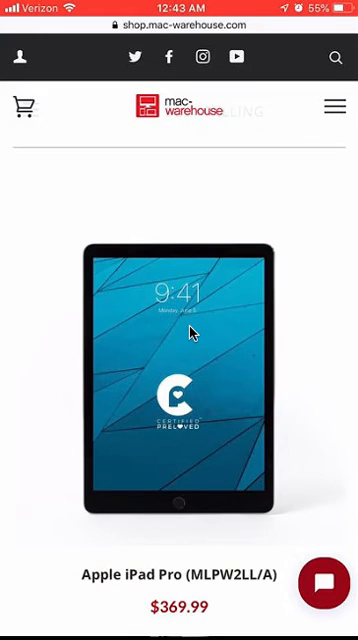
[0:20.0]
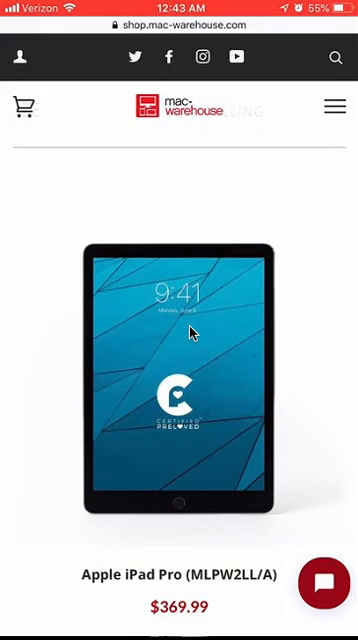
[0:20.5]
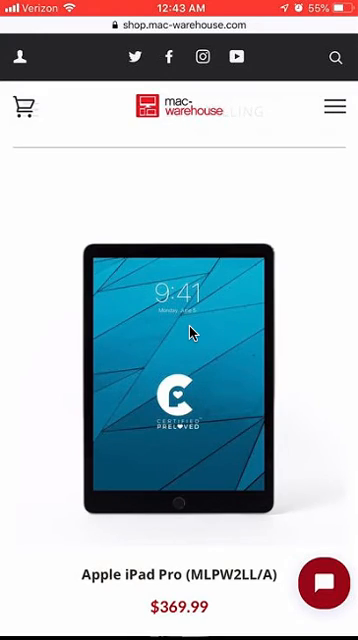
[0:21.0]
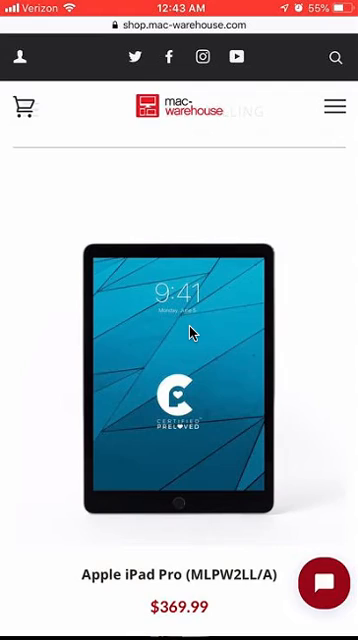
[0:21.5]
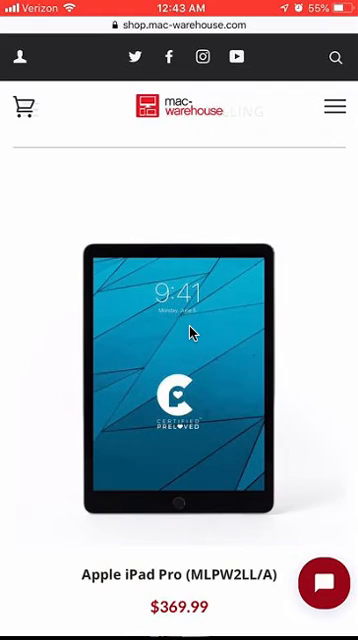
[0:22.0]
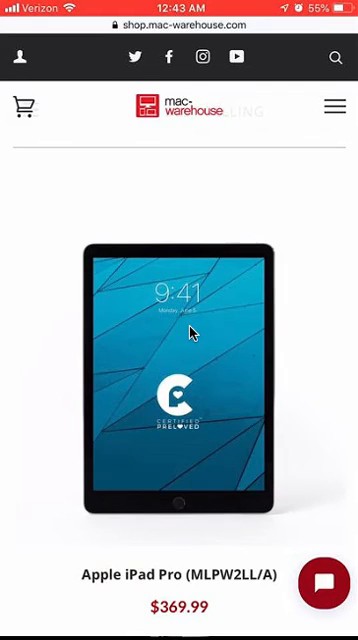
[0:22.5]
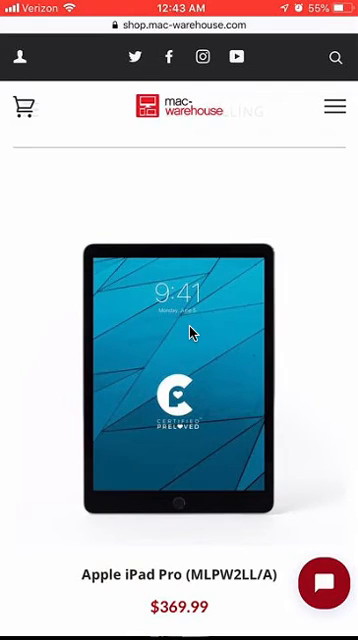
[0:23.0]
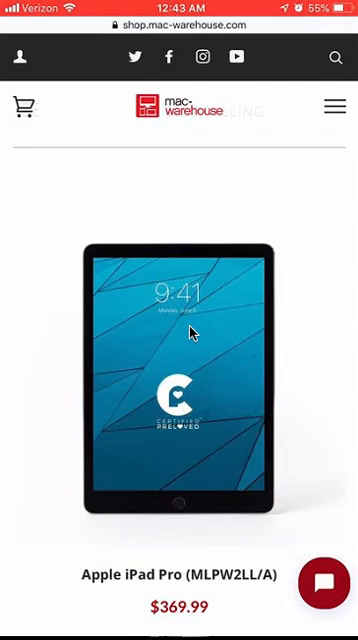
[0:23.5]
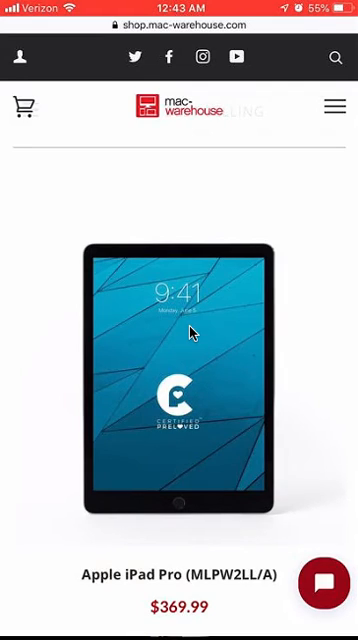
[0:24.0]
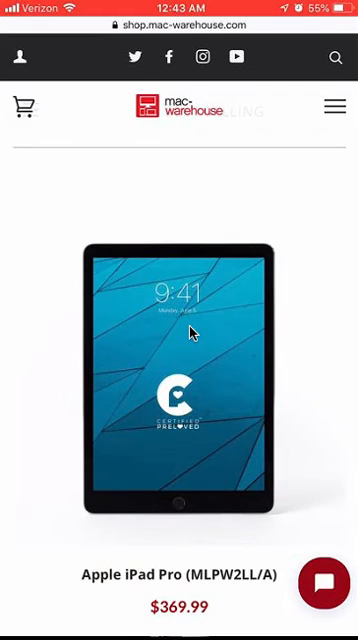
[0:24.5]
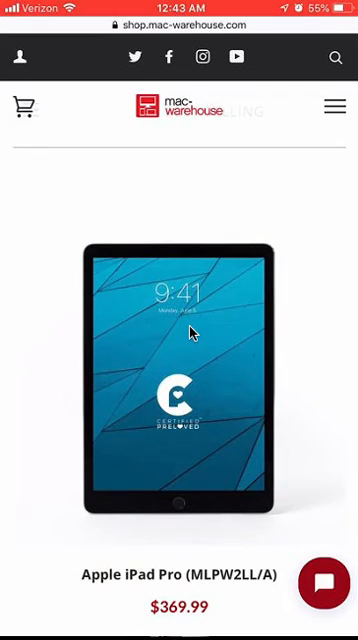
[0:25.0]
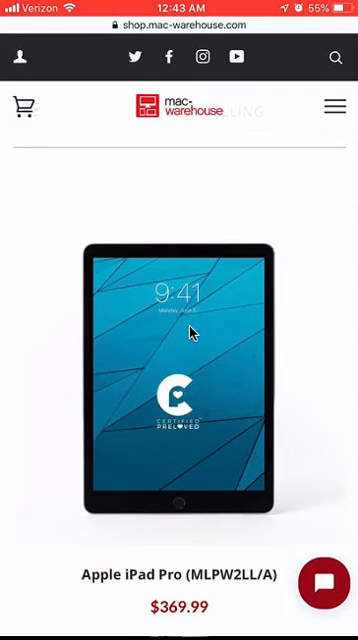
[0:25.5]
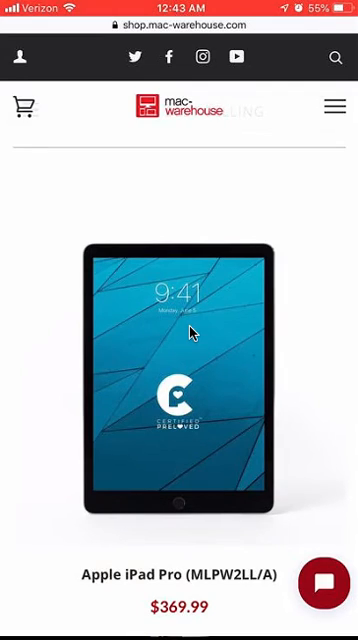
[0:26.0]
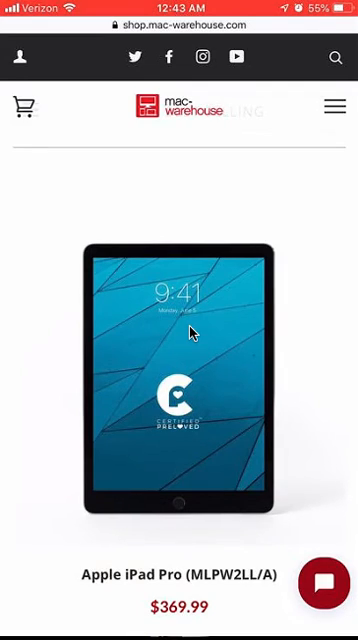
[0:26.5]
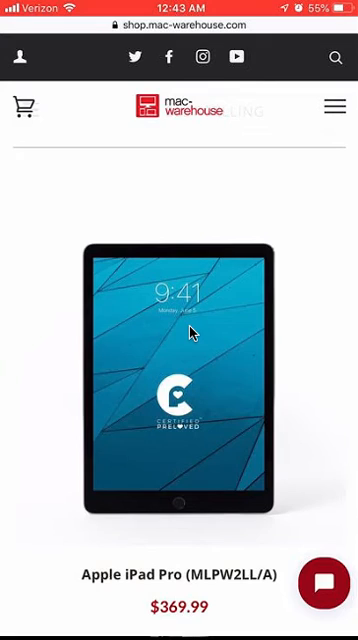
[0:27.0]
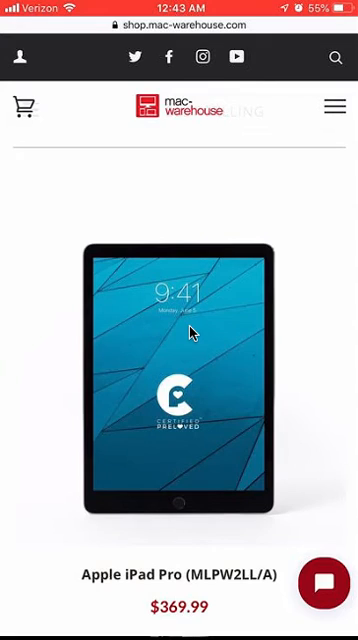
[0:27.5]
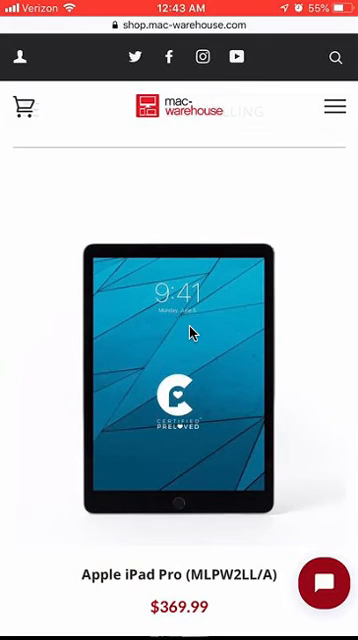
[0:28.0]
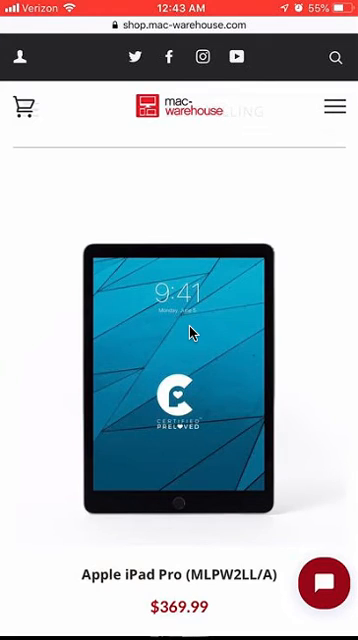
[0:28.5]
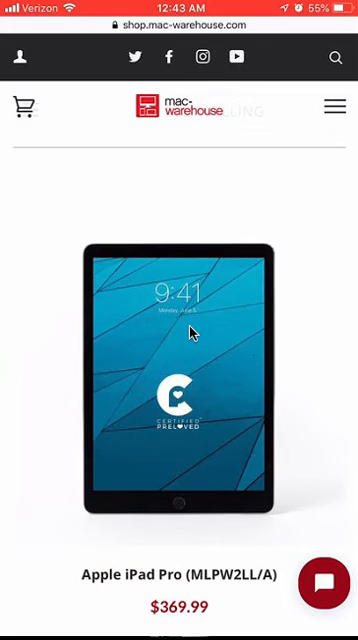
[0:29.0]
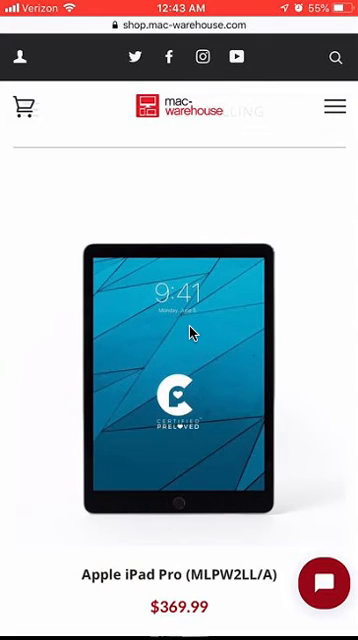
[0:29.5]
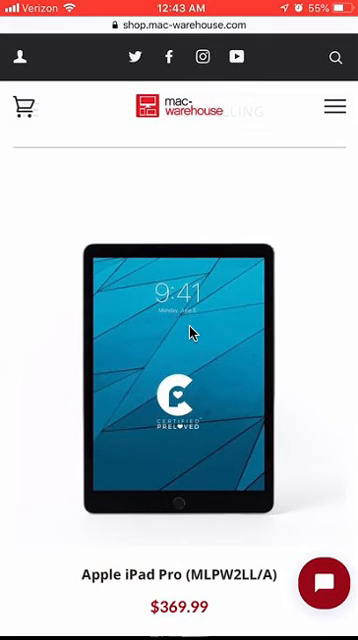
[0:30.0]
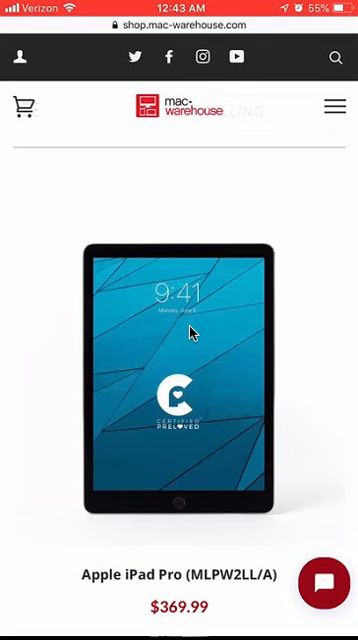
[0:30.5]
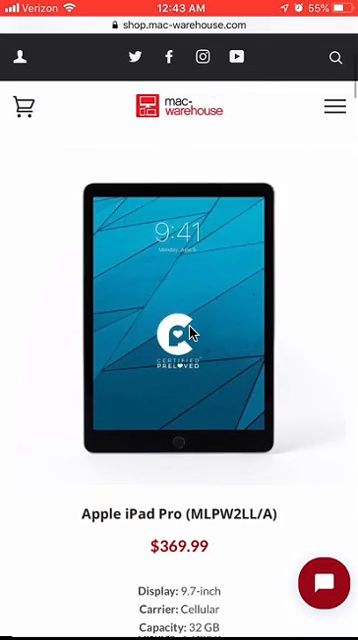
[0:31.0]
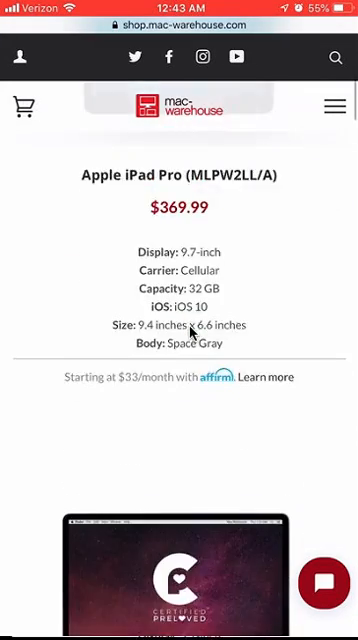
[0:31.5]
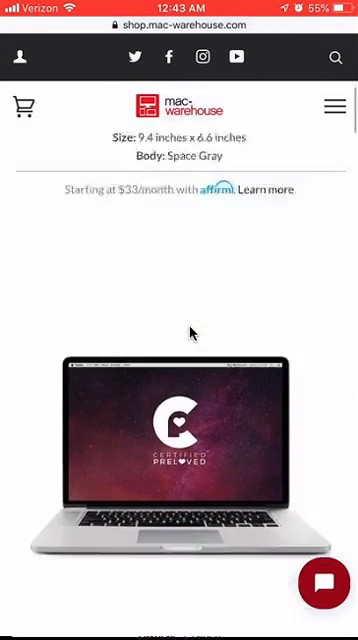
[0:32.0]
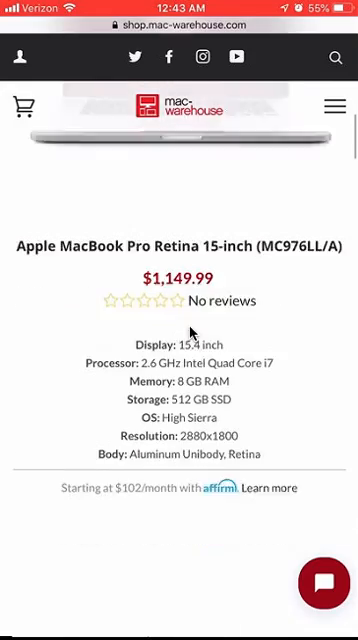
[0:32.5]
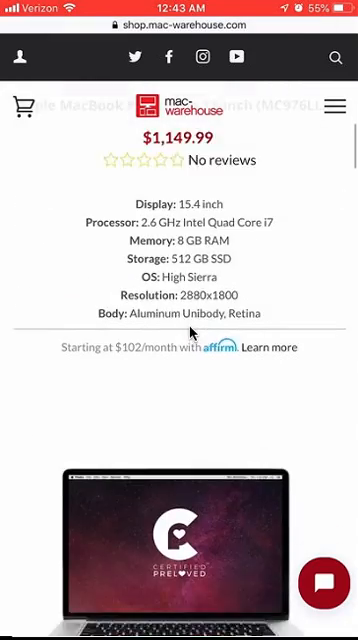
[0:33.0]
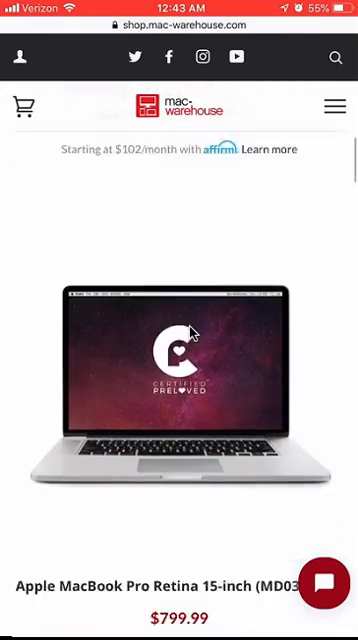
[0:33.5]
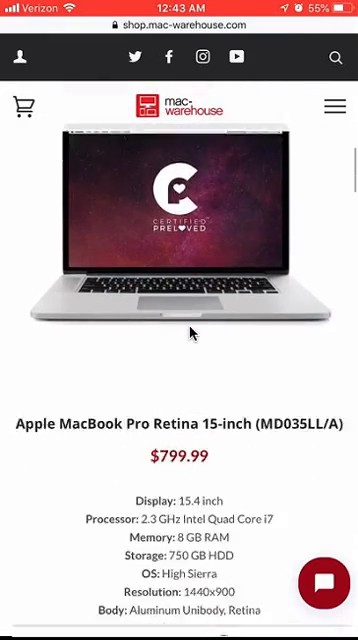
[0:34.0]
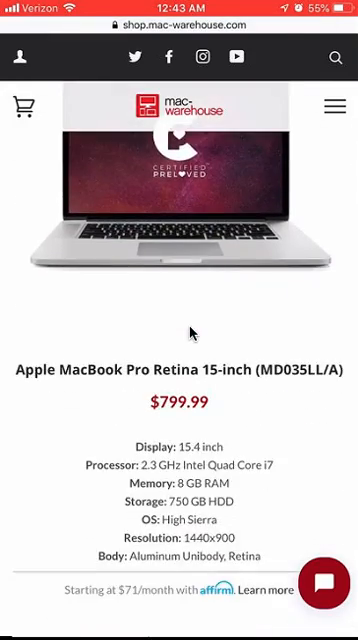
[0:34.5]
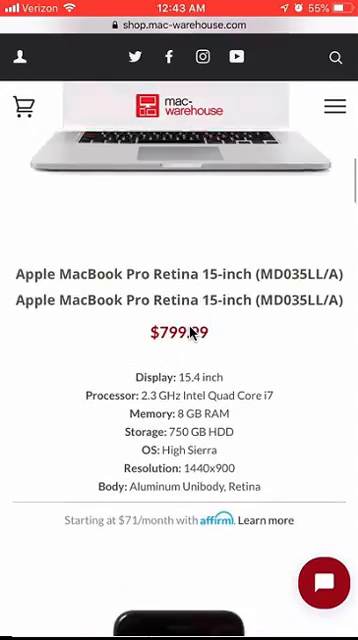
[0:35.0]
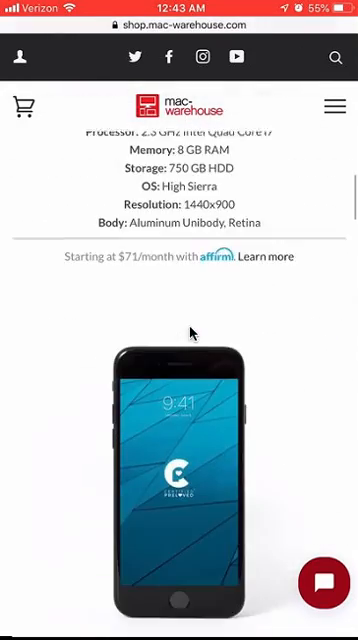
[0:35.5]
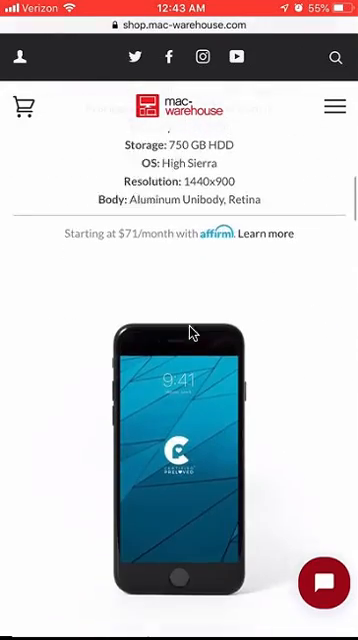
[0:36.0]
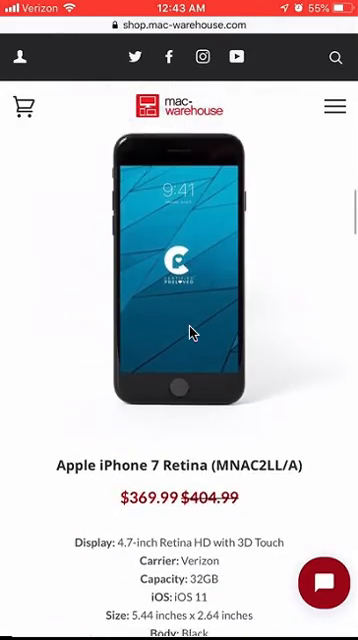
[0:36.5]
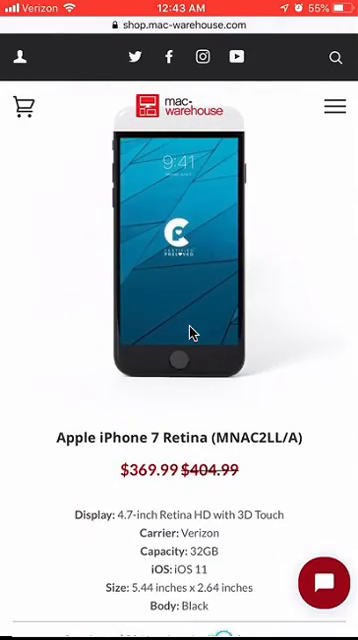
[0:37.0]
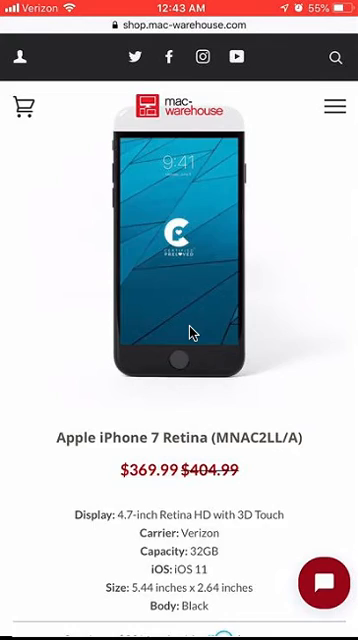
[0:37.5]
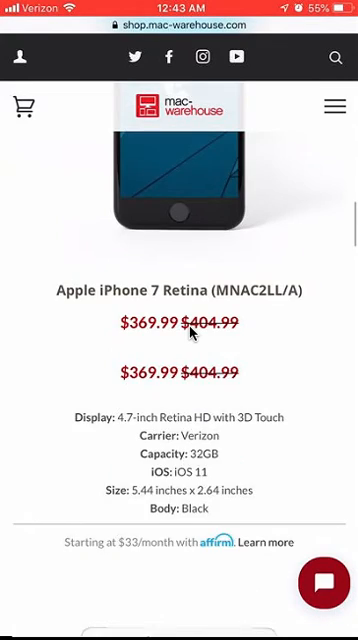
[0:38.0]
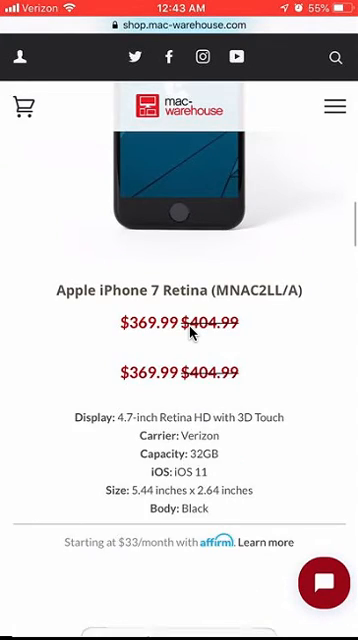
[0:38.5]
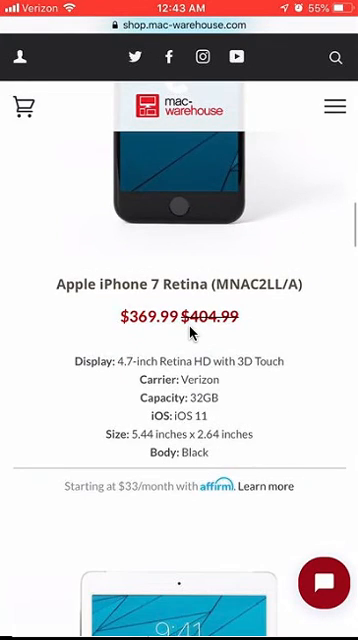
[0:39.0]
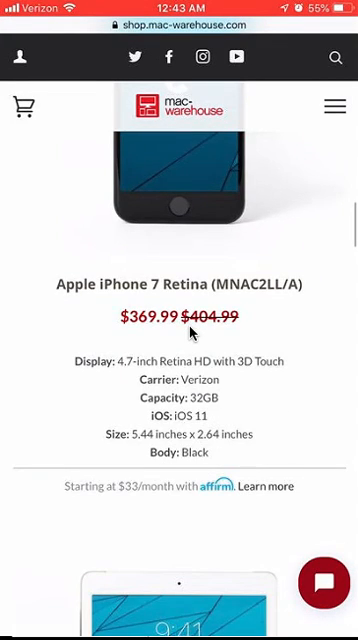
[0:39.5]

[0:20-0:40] A user on either a cell phone or probably a tablet is on the OneShopMacWarehouse.com website, apparently shopping for an Apple iPad Pro currently priced at $369.99. The page offers options to add to cart and to go to Twitter or Facebook. The user scrolls down to an Apple MacBook Pro Retina 15-inch priced at $1,149.99, then keeps scrolling to another Apple MacBook Pro Retina 15-inch priced at $799.99. Scrolling a little more past other options, the user then looks at an Apple iPhone 7 Retina priced at $369.99, reduced from $404.99.